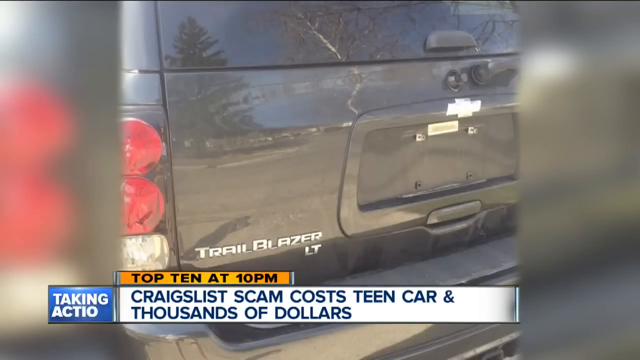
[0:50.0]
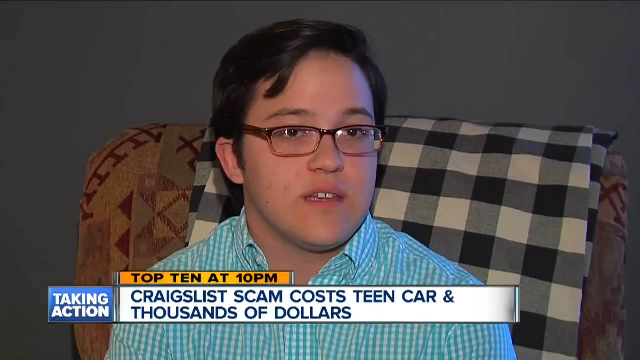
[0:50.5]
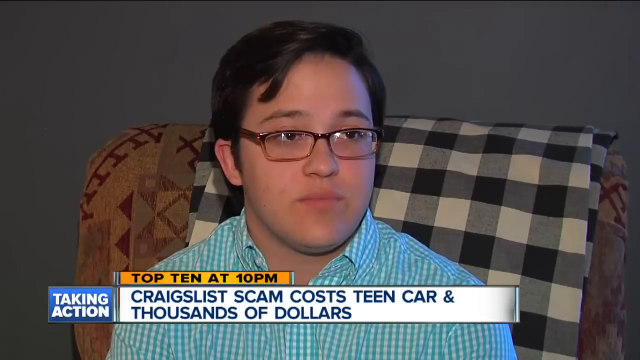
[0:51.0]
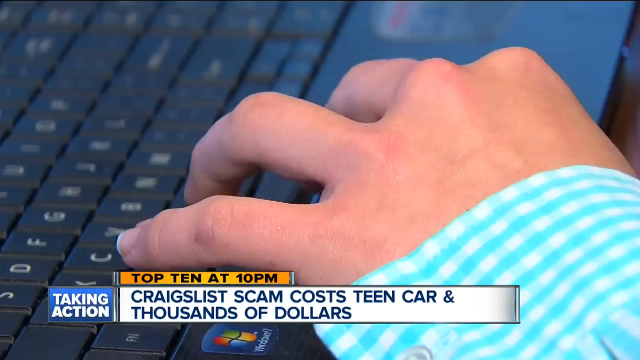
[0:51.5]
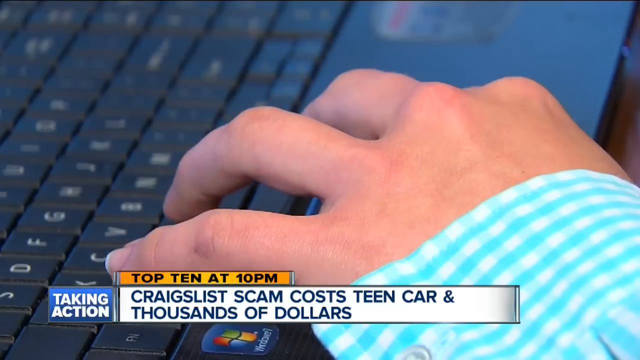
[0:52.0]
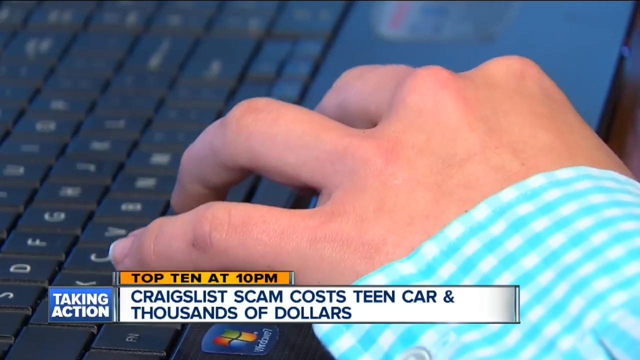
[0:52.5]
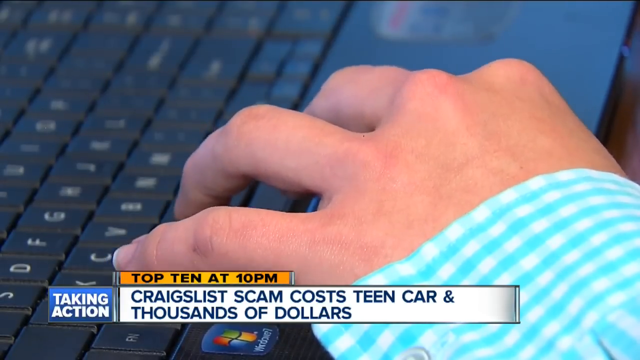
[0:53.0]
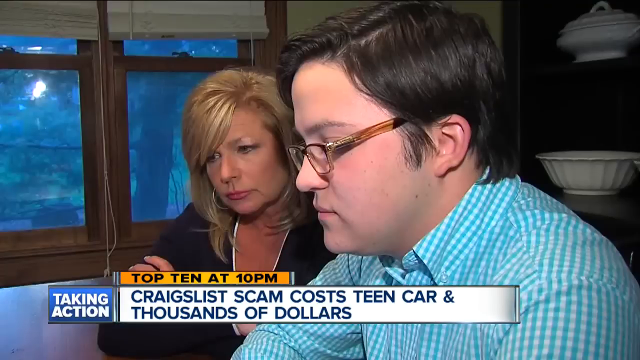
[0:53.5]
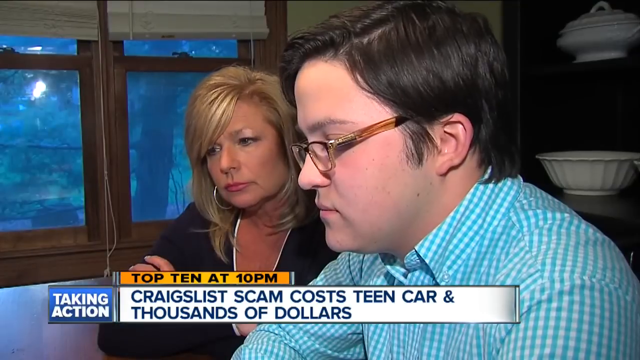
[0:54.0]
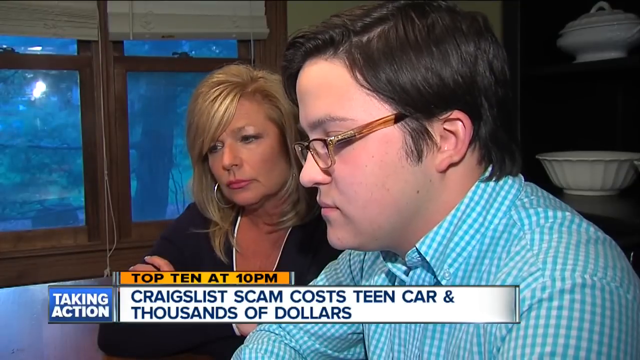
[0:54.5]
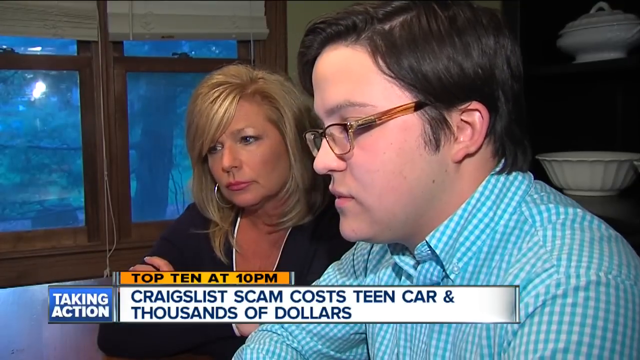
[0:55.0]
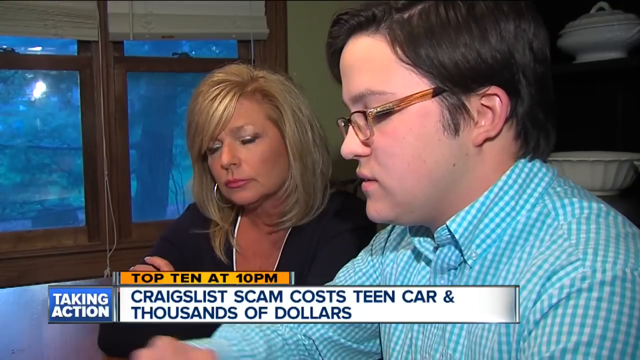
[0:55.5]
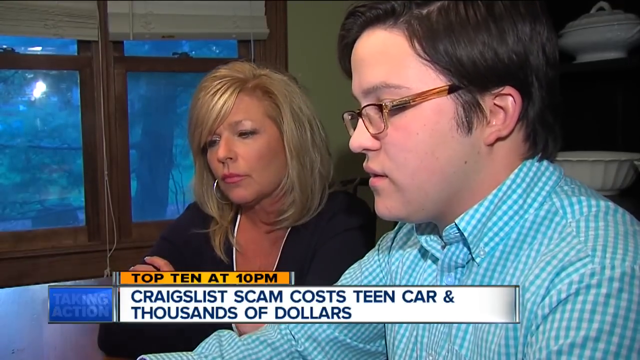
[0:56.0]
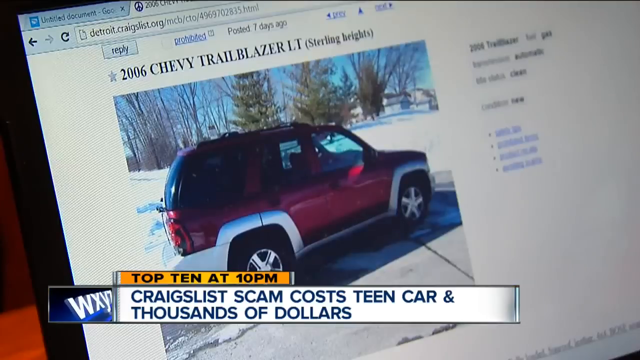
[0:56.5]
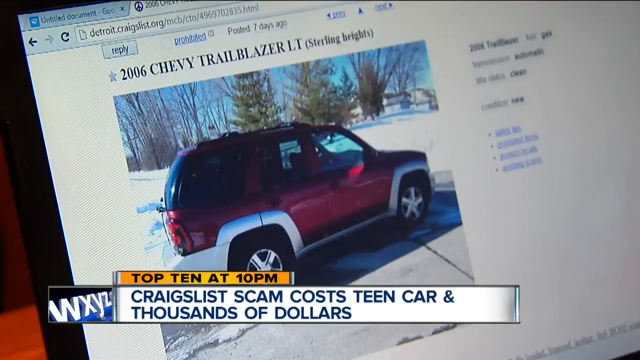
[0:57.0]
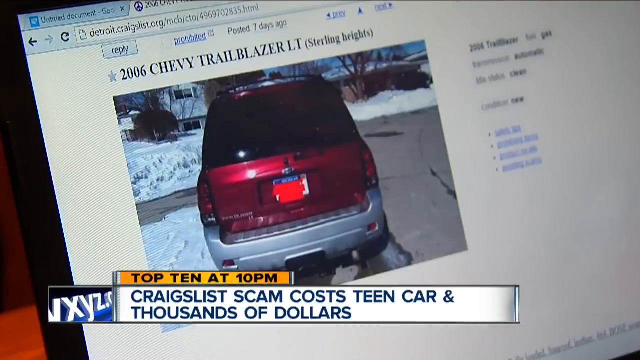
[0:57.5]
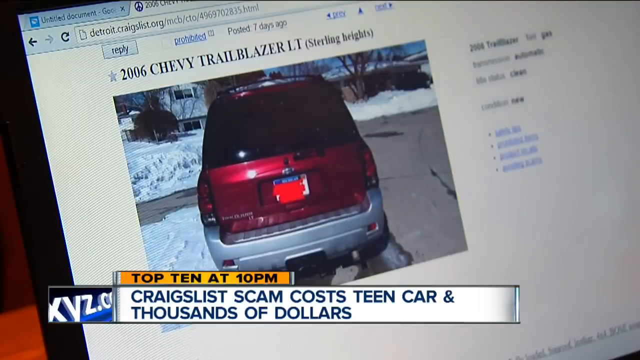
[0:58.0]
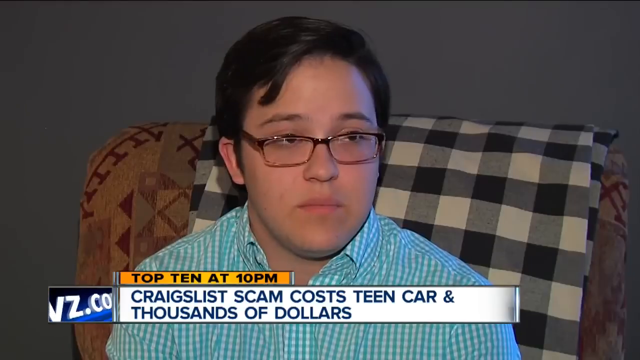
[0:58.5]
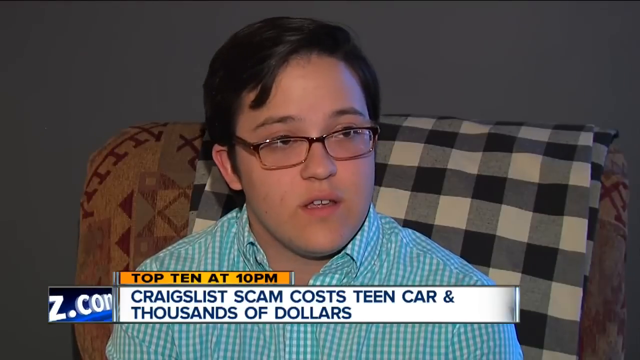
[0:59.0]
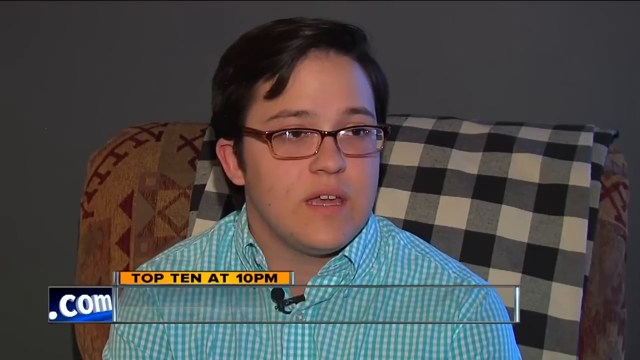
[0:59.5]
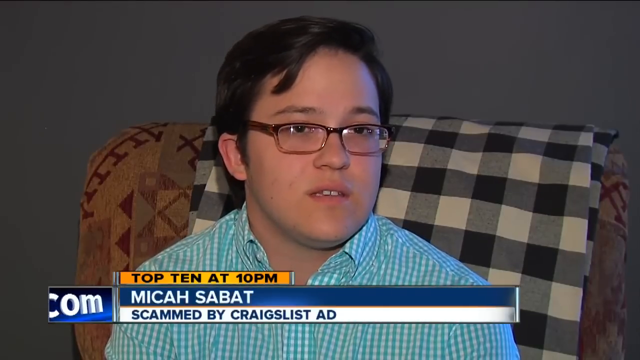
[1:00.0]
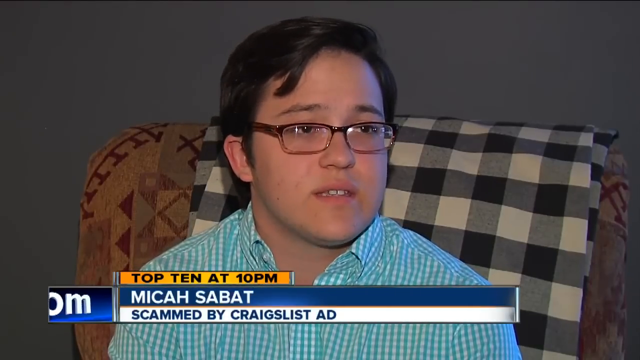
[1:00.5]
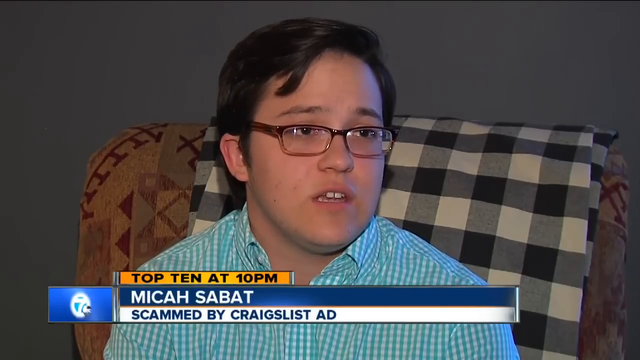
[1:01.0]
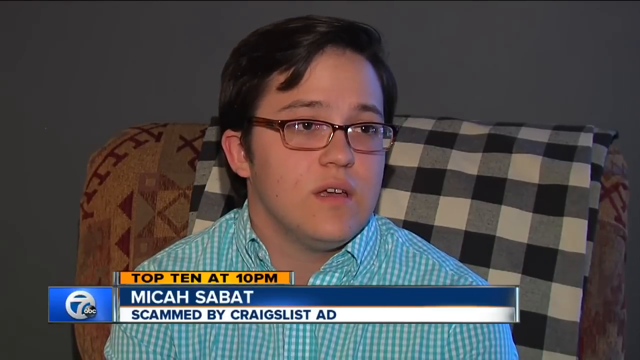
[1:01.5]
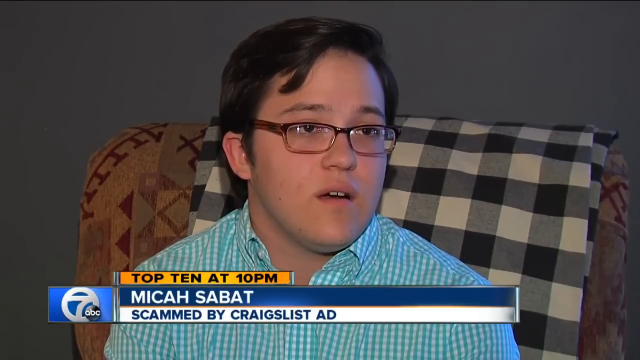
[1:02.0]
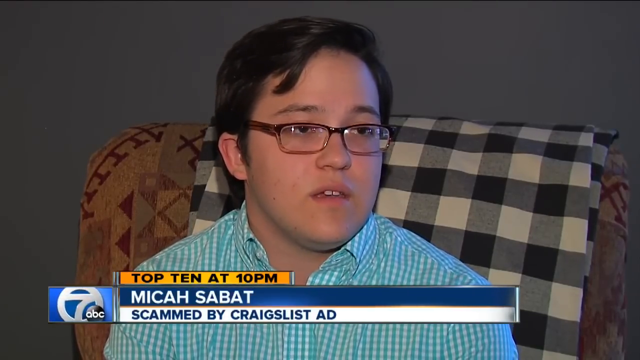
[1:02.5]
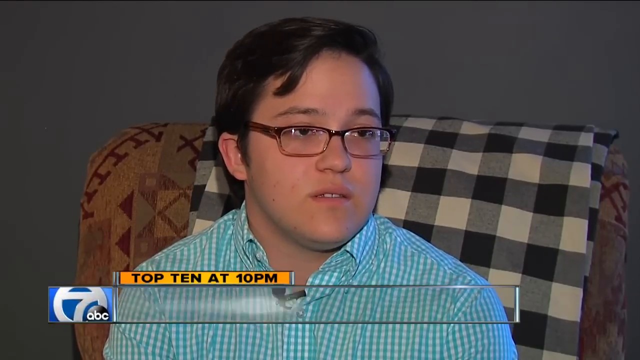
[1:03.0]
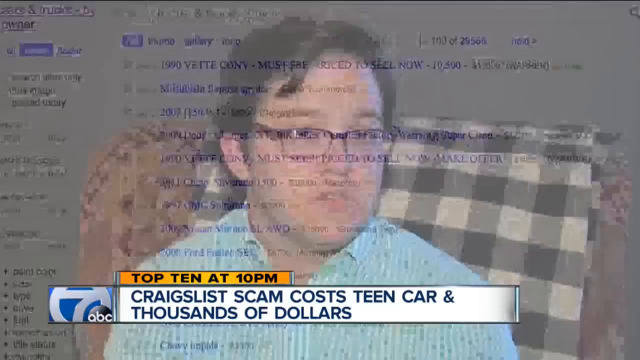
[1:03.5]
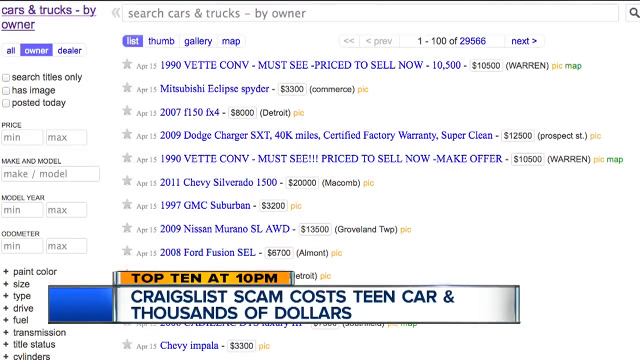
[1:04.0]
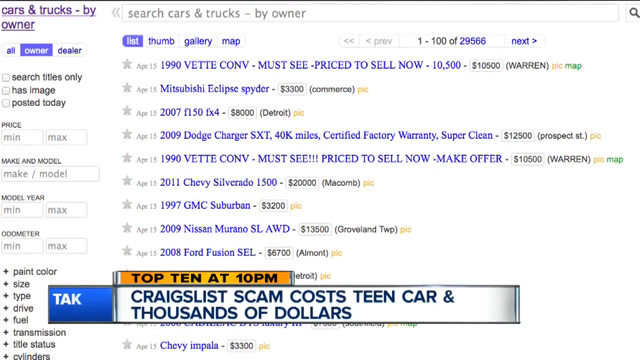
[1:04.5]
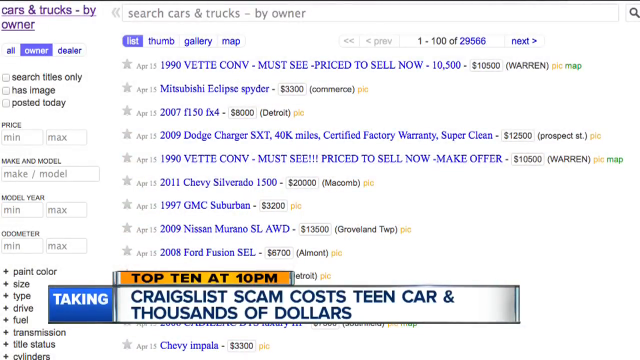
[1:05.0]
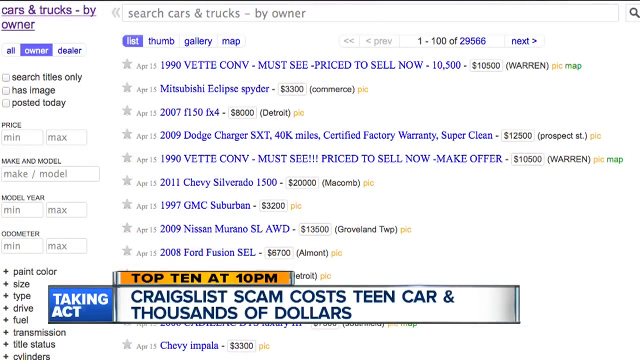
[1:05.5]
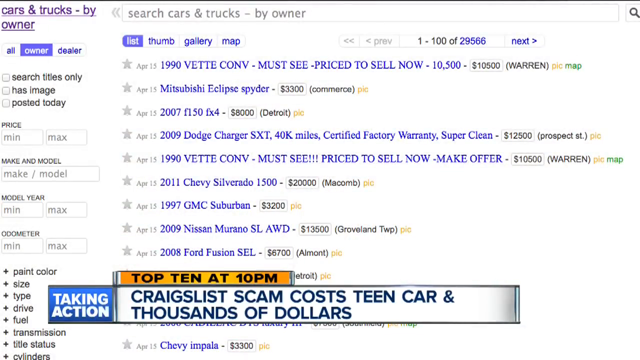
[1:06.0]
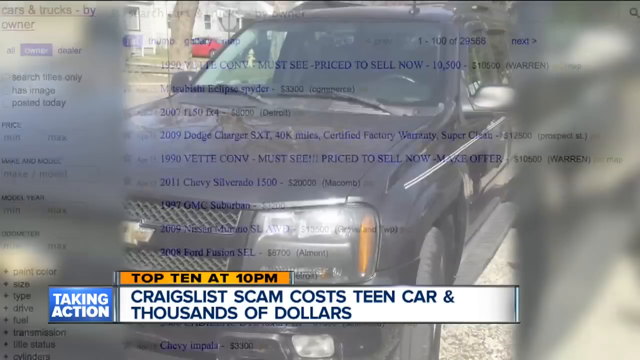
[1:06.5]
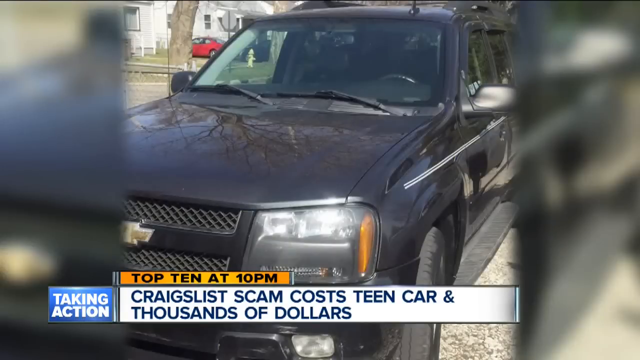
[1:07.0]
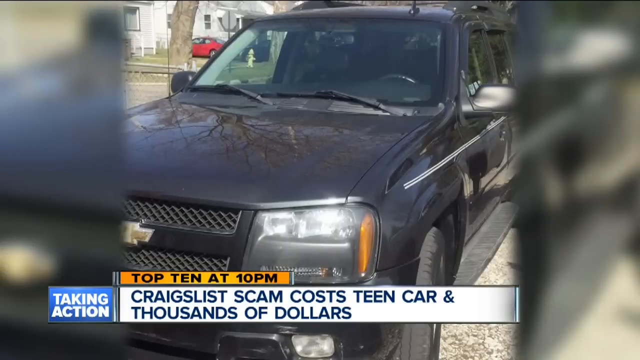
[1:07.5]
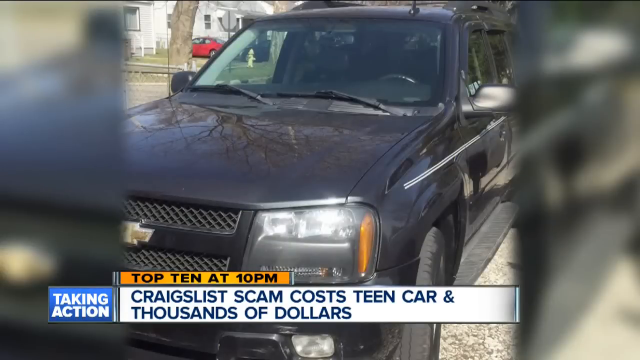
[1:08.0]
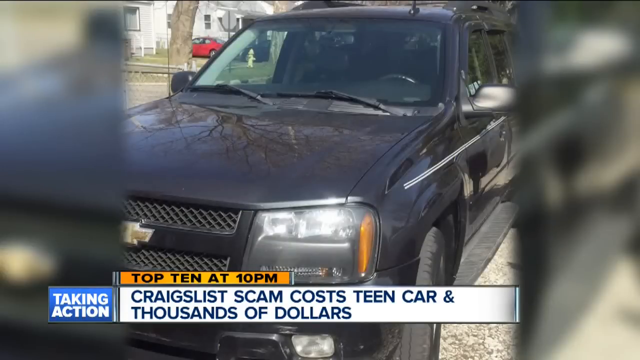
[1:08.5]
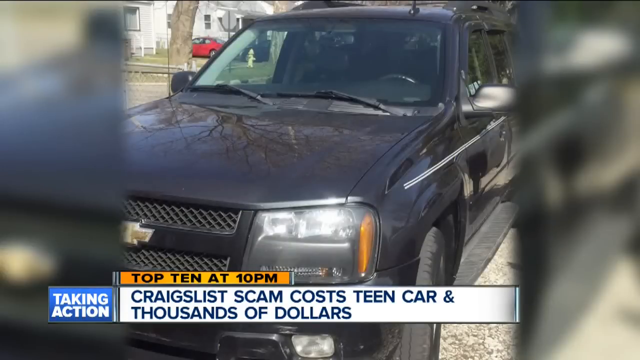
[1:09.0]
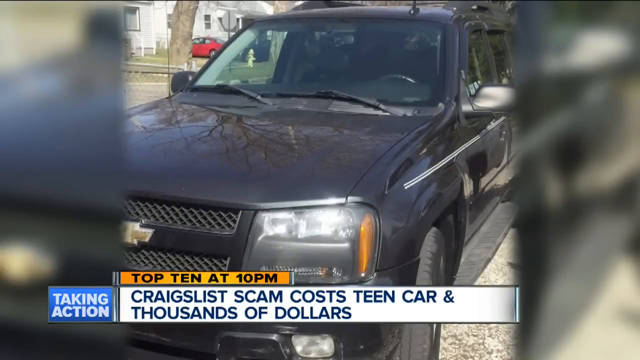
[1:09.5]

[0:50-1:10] The teen sits in front of the rocking chair, then the view quickly goes to a laptop, with the same plaid shirt with turquoise and white stripes visible; someone appears to be typing on the laptop. The mom and son then appear with the anchor, with some windows in the background. The mom looks to be in her 40s or 50s, with her makeup and hair done, large hoop earrings, and a black shirt outlined in white. They appear to be showing a Craigslist ad for a "2006 Chevy Trailblazer LT," with "(Sterling Heights)" in parentheses. The view returns to the teen at the rocking chair, with text at the bottom reading "top 10 at 10 p.m. Micah Sabbat, scammed by Craigslist ad." Then a Craigslist page shows a bunch of posts for various vehicles being sold.